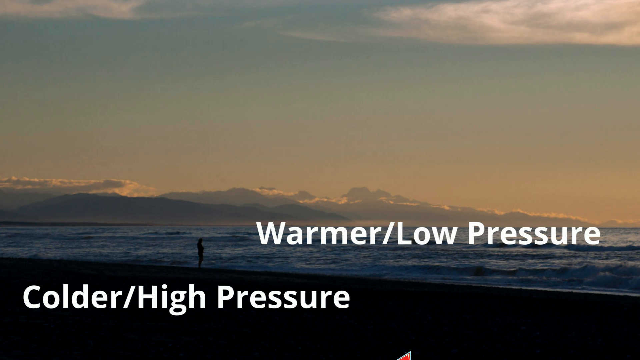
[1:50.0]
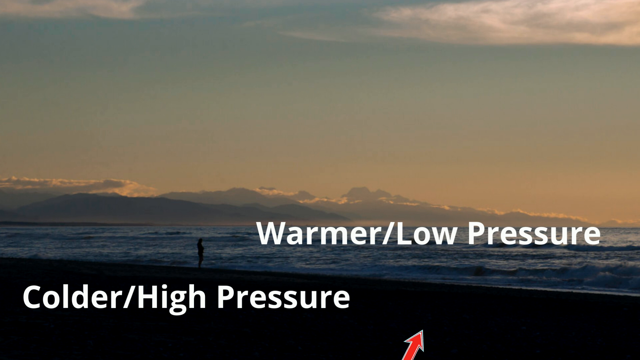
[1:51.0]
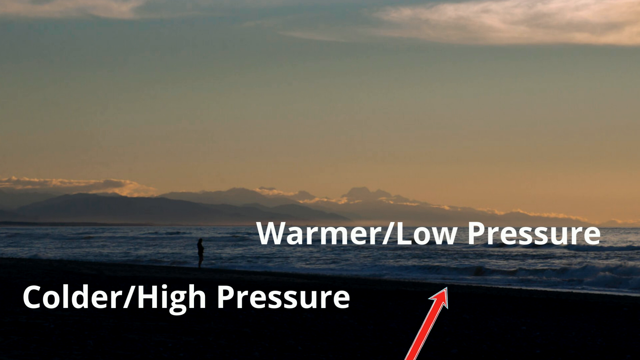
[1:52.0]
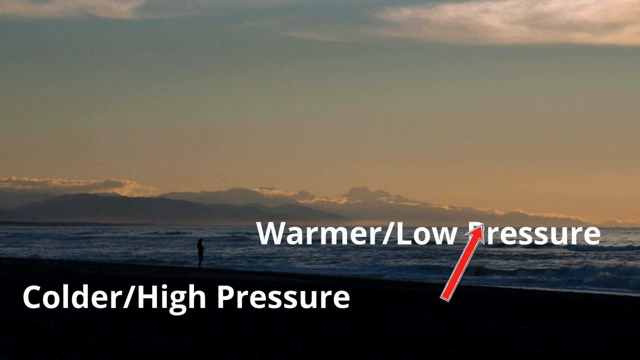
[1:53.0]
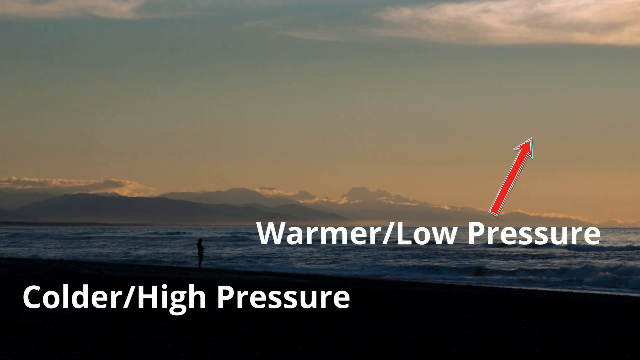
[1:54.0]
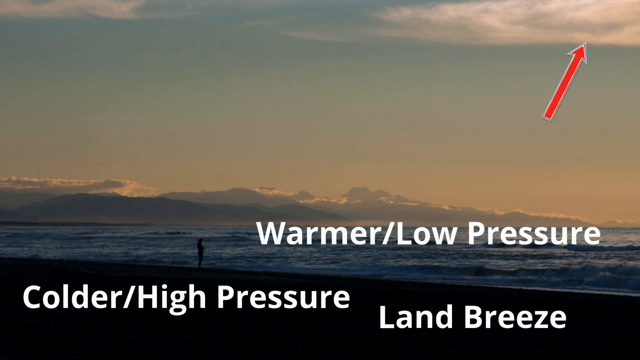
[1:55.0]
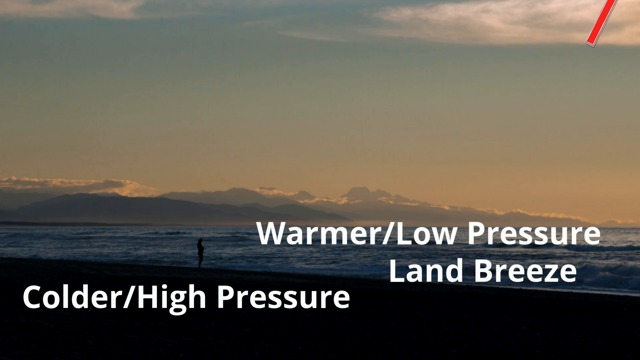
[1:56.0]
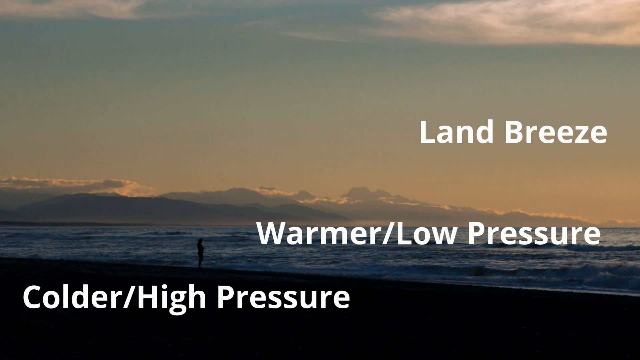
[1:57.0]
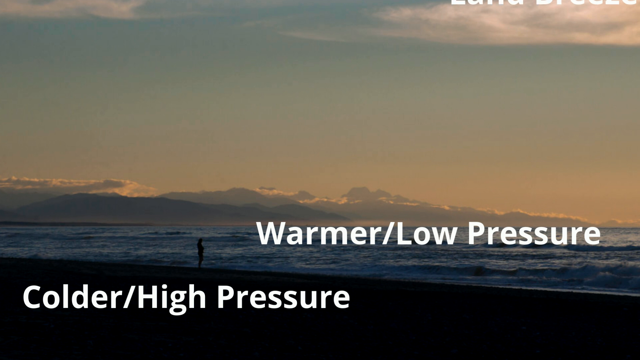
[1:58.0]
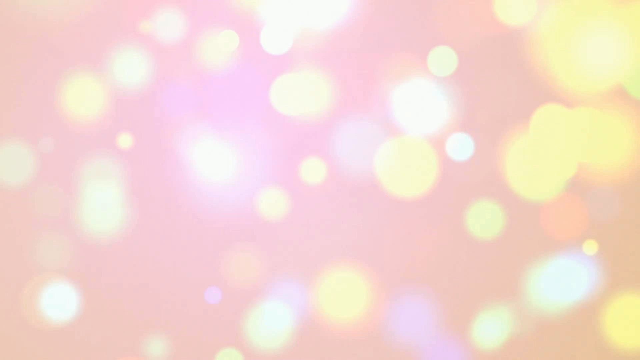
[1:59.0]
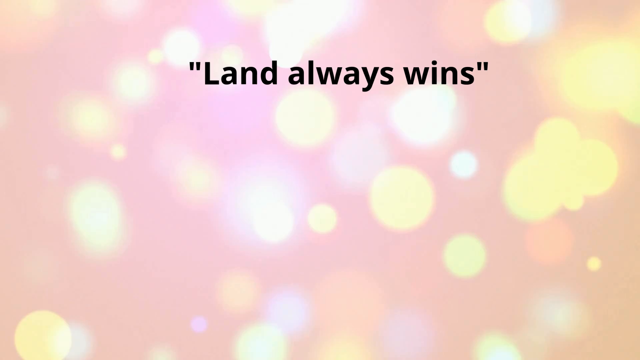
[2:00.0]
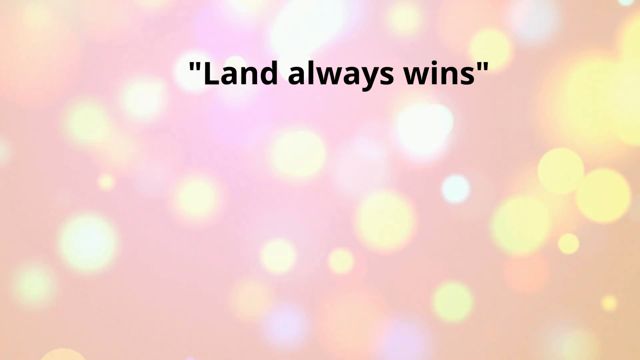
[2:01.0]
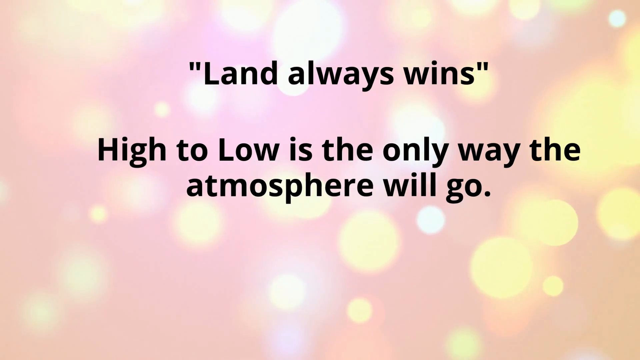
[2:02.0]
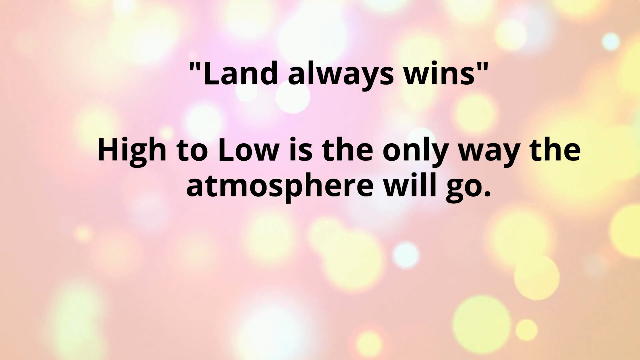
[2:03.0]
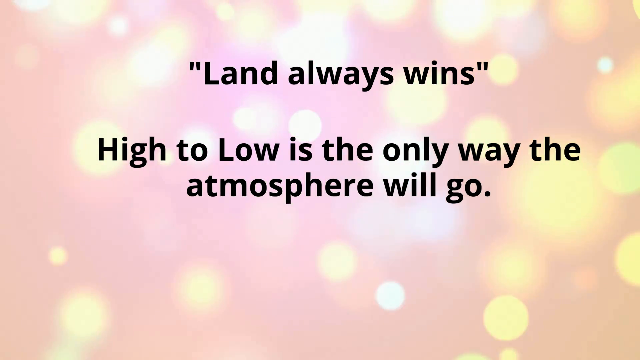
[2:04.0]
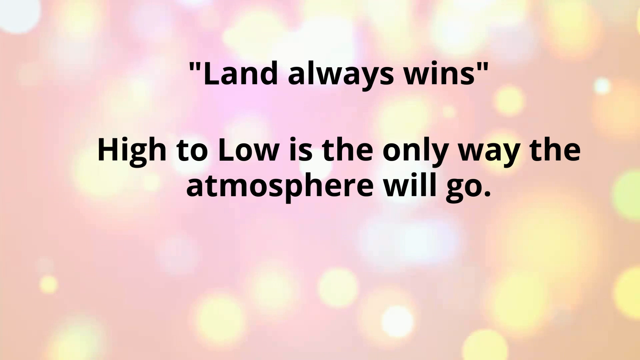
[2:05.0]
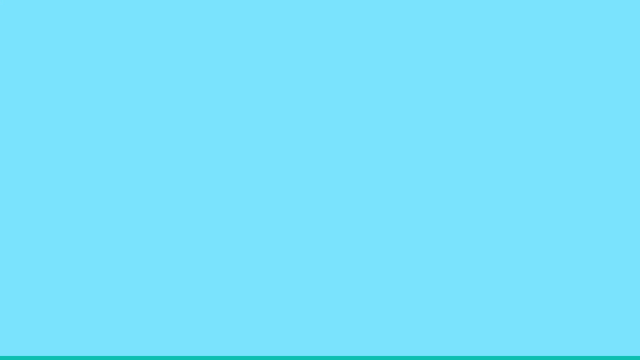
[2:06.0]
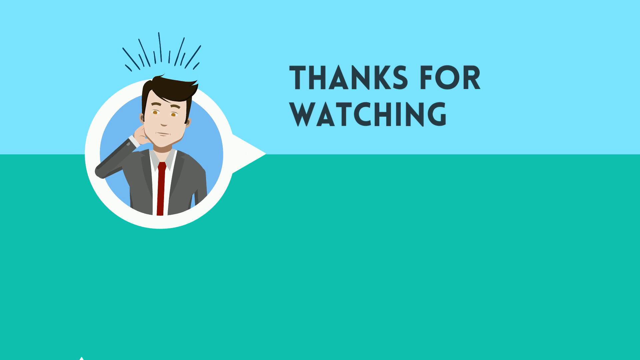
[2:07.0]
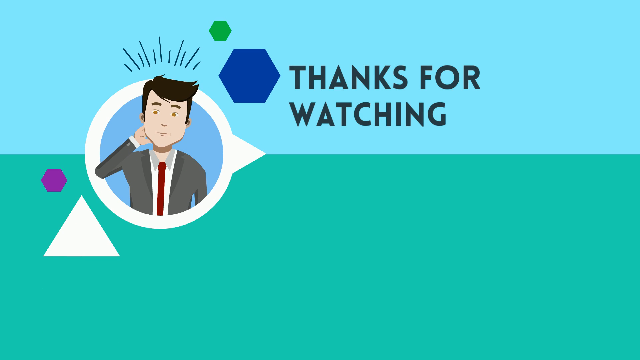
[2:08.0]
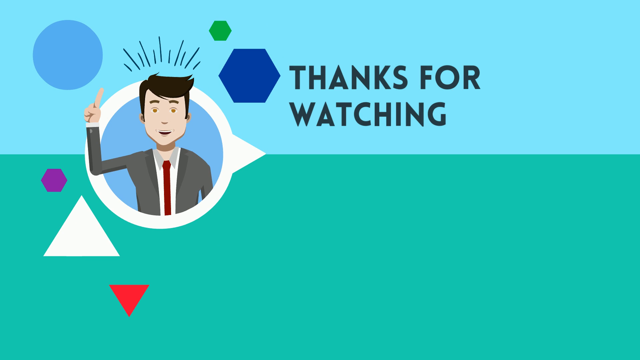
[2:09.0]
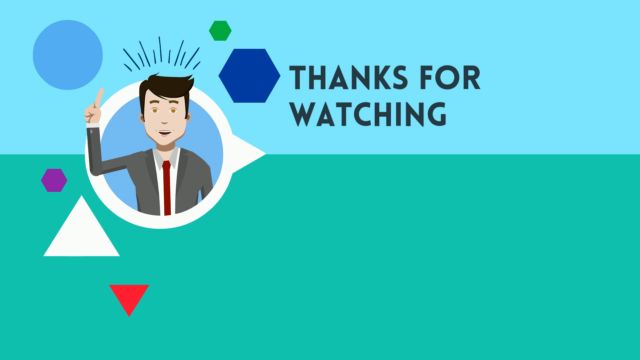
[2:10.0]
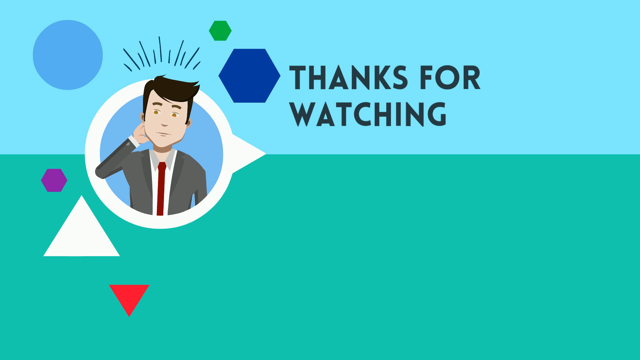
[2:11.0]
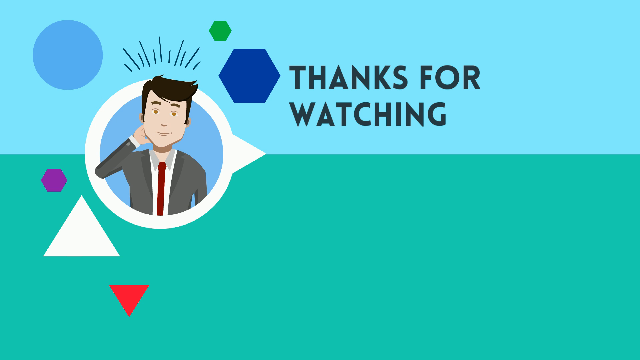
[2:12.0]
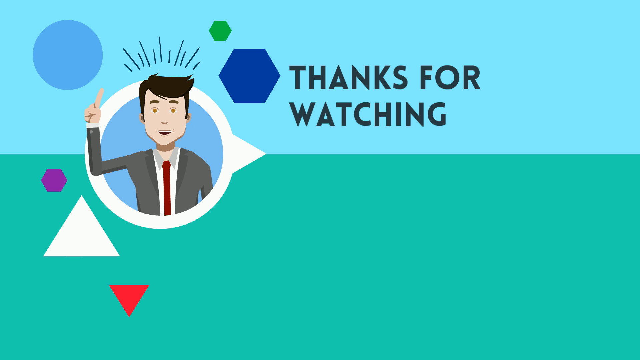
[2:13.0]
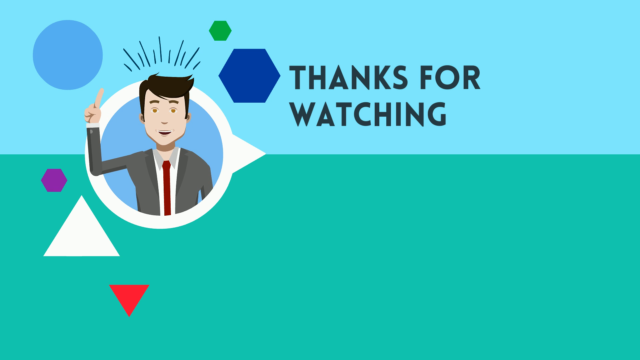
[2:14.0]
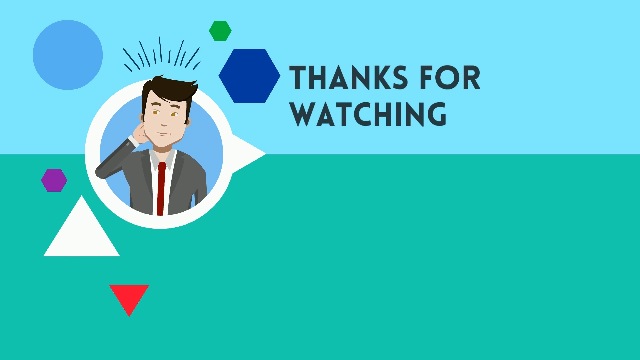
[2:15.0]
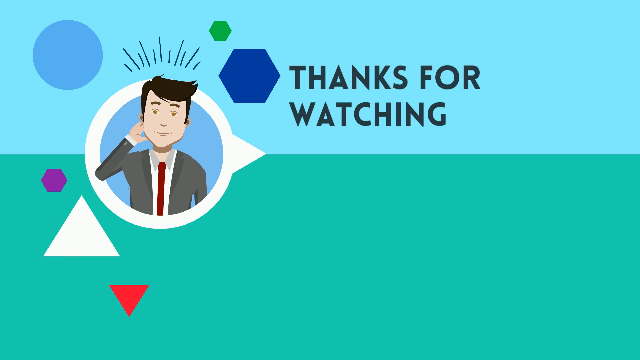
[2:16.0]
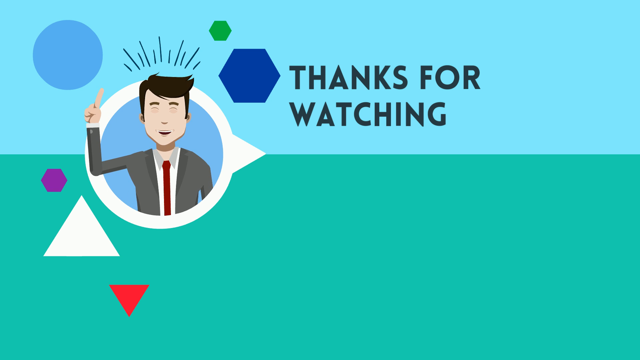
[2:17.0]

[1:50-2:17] The text "colder / high pressure" is shown at the bottom left of the screen, and on the right side, slightly above it, the words "warmer / low pressure" appear in white. In the background a person stands at the beach; the silhouette is hard to see, so it is unclear whether it is a man or a woman, and it looks like sunrise or sunset. A red arrow comes up from the bottom center of the image, moving diagonally toward the words "low pressure" and passing through the word "pressure". The text "land breeze" then comes up from the same spot and passes through the words "low pressure". The same sparkle transition follows, with the pink and orange background and orange, yellow, and silver sparkles. The text "Land Always Wins", in quotation marks, appears in black at the top center, and below it the text "high to low is the only way the atmosphere will go" appears in black. An animated figurine of a gentleman is shown. He has short black hair combed to the side and uses his right hand, on the viewer's left, to scratch the back of his neck. He wears a gray suit with a white shirt and a red tie. The background is light blue on top and green on the bottom, and "thanks for watching" is written near the right center. Various geometric shapes appear around the bubble of the man: a light blue circle, a green hexagon, a blue hexagon, a purple hexagon, a white triangle, and a red upside-down triangle.